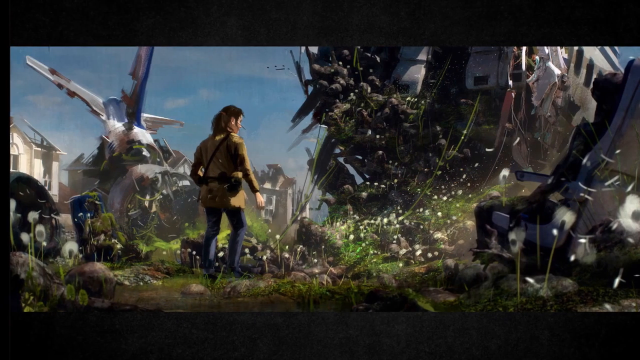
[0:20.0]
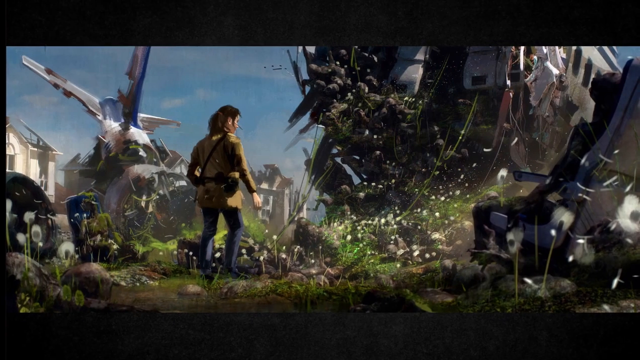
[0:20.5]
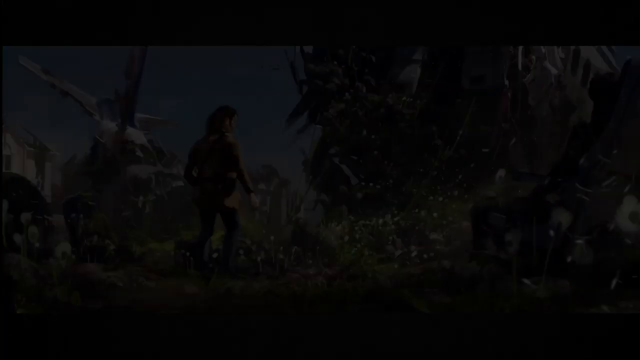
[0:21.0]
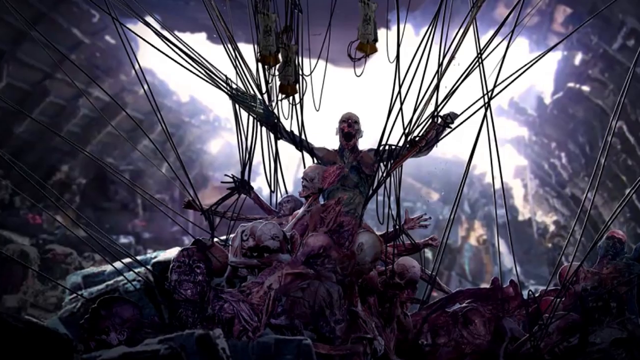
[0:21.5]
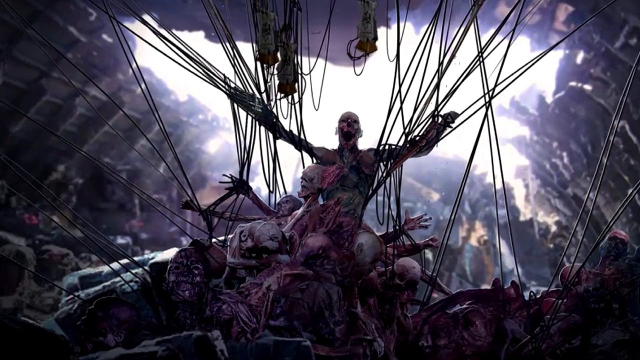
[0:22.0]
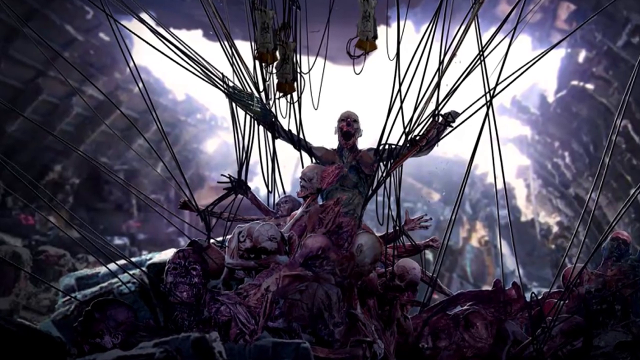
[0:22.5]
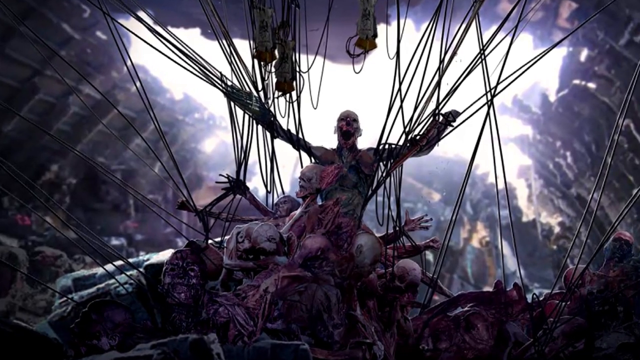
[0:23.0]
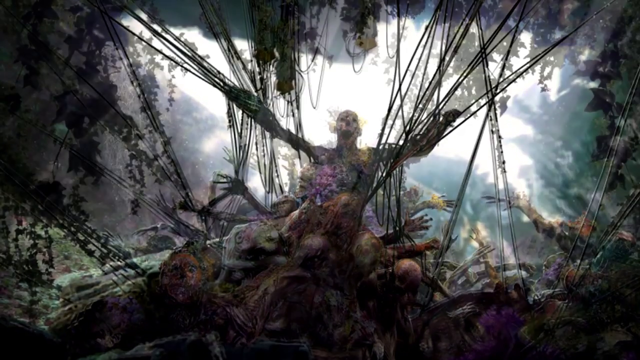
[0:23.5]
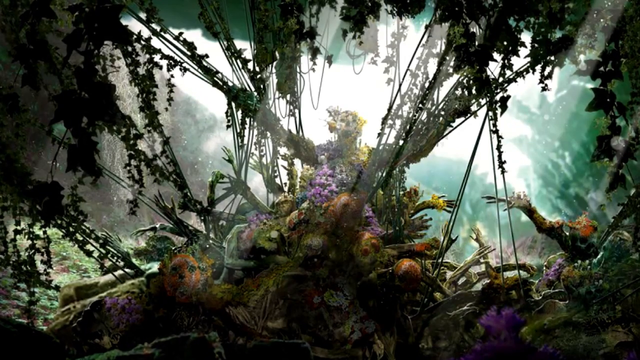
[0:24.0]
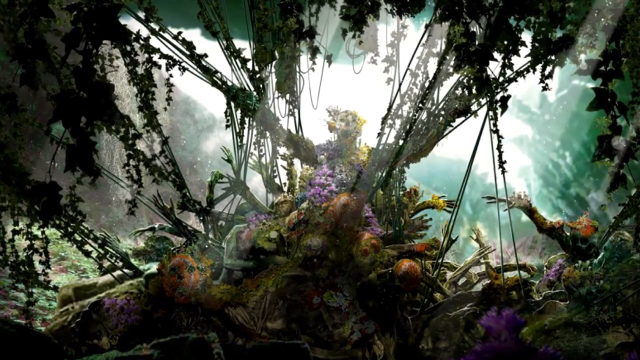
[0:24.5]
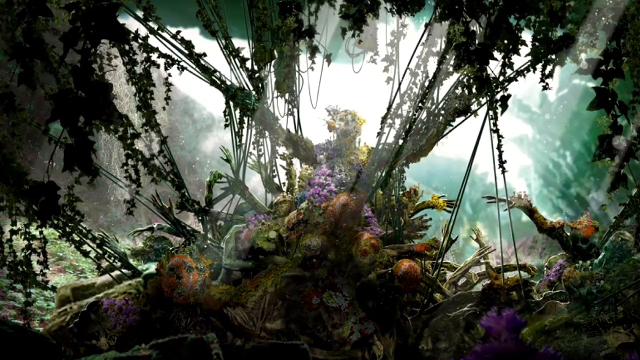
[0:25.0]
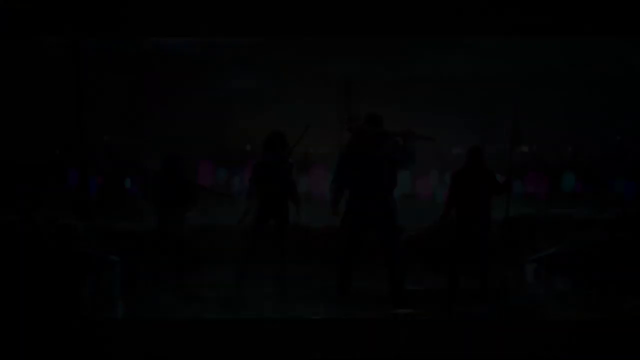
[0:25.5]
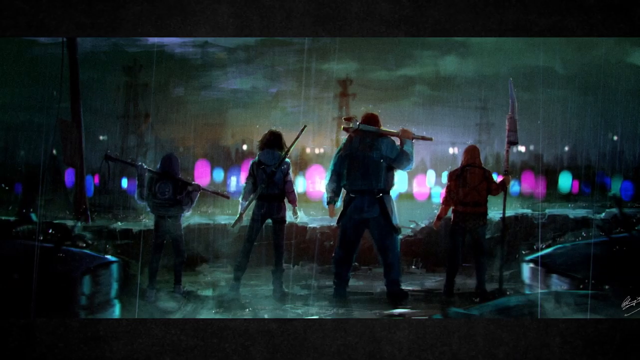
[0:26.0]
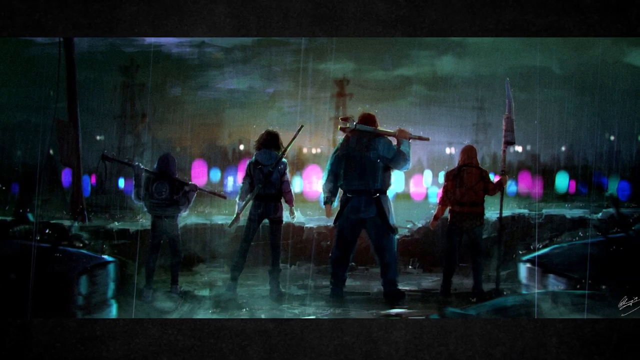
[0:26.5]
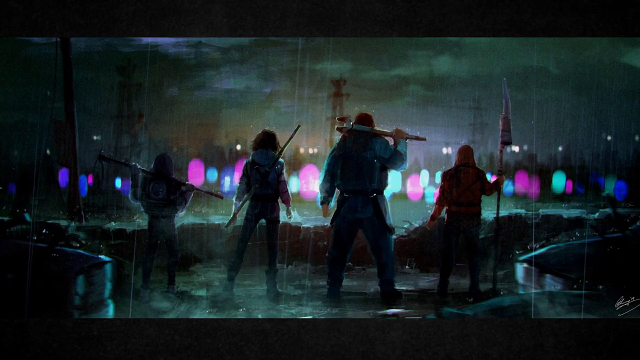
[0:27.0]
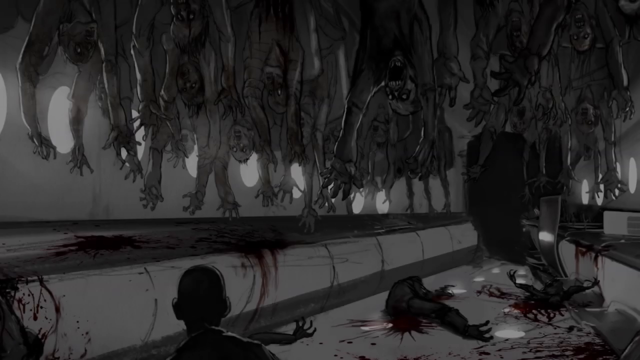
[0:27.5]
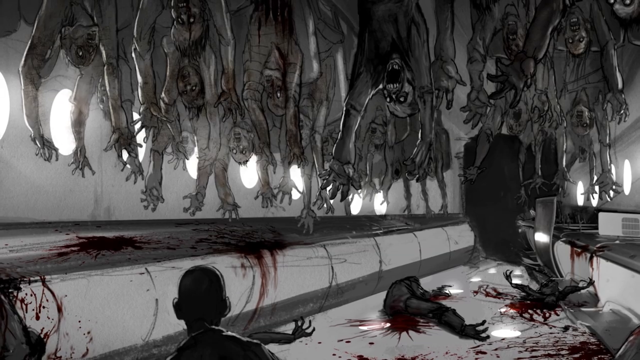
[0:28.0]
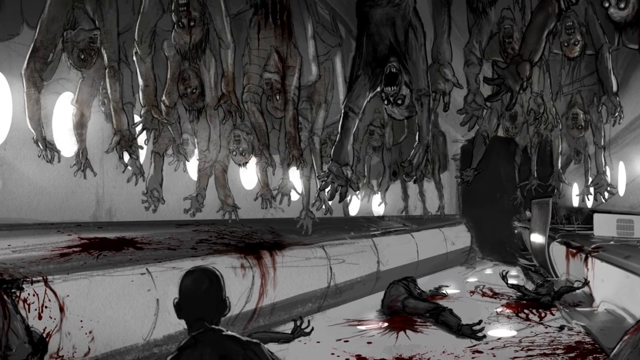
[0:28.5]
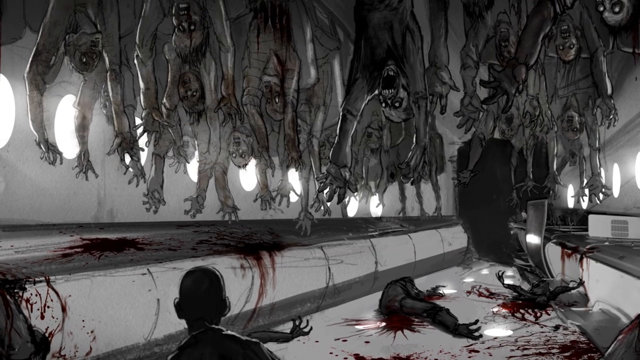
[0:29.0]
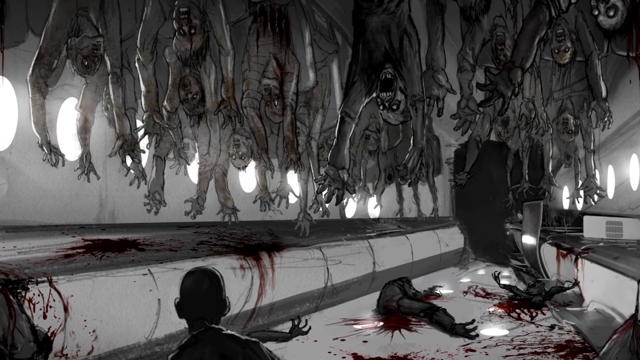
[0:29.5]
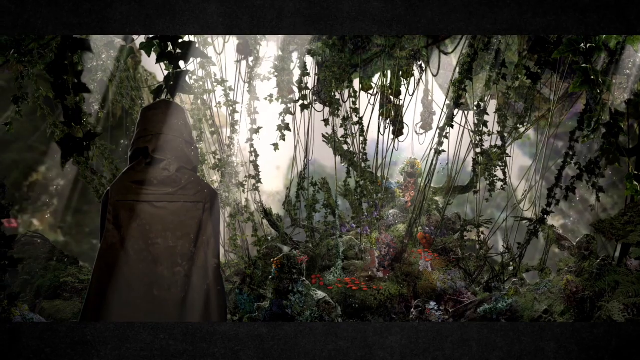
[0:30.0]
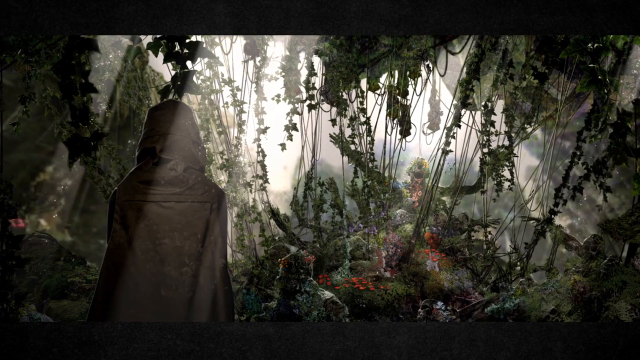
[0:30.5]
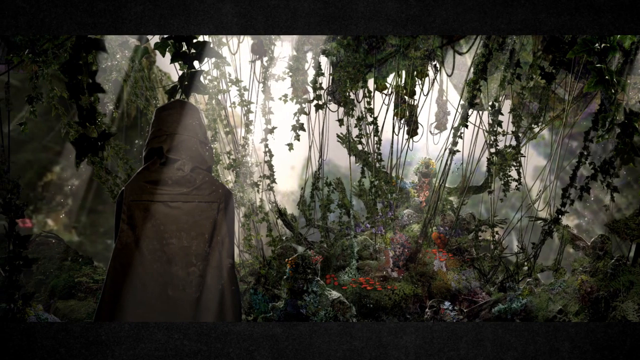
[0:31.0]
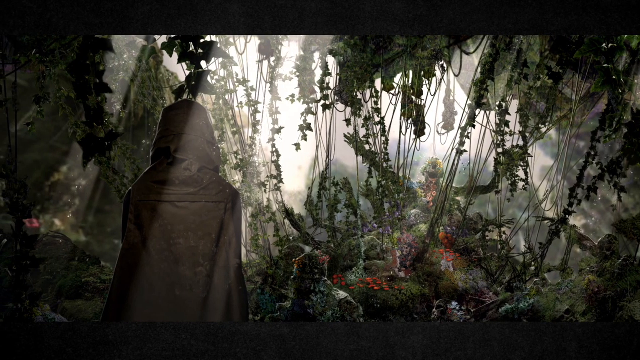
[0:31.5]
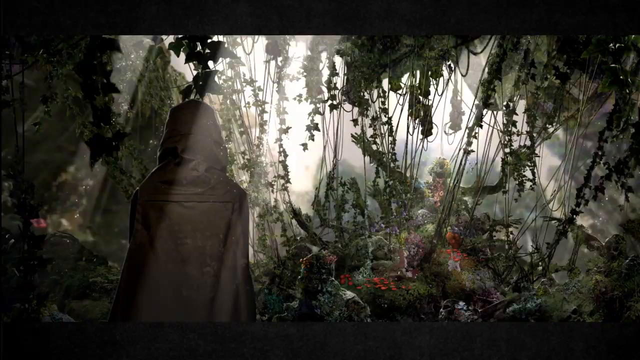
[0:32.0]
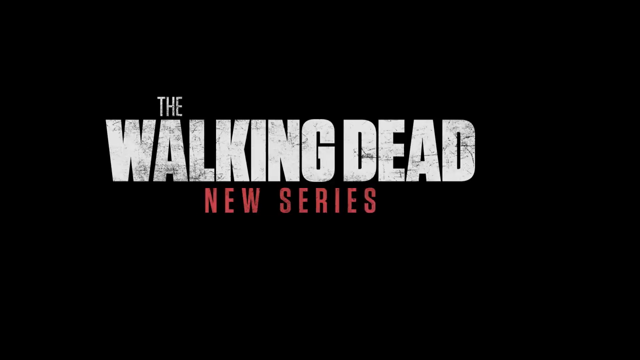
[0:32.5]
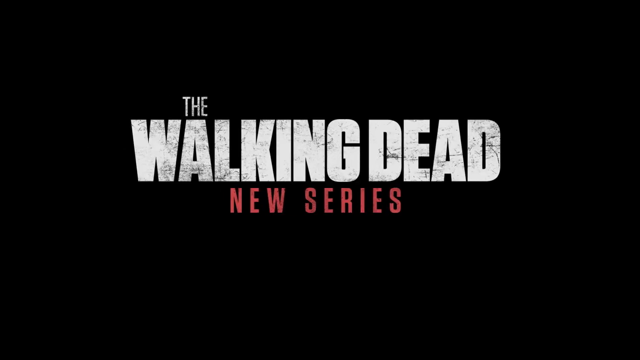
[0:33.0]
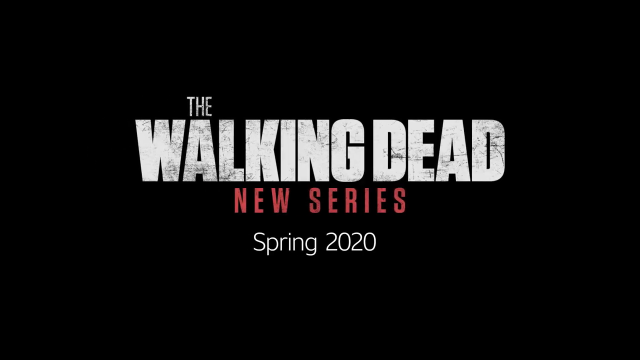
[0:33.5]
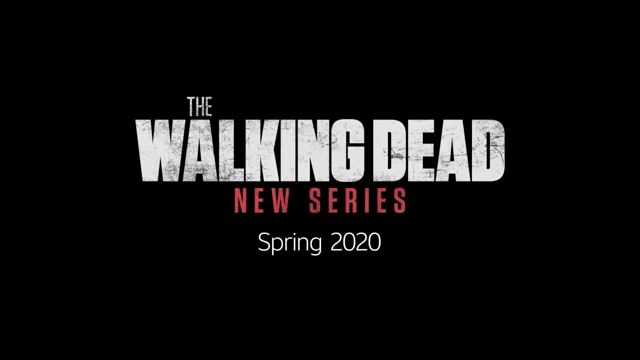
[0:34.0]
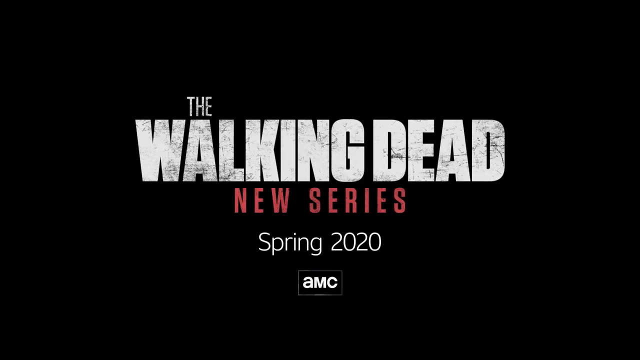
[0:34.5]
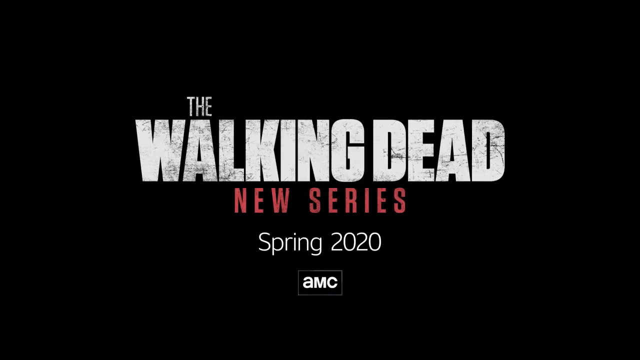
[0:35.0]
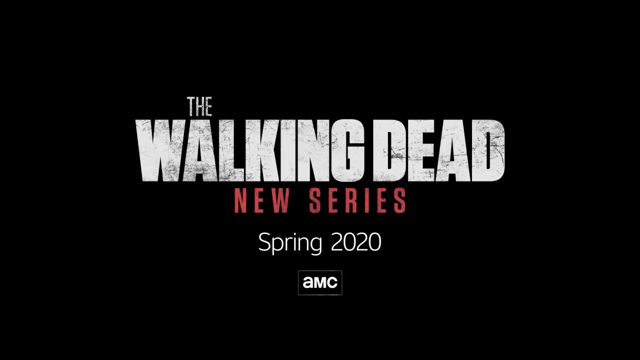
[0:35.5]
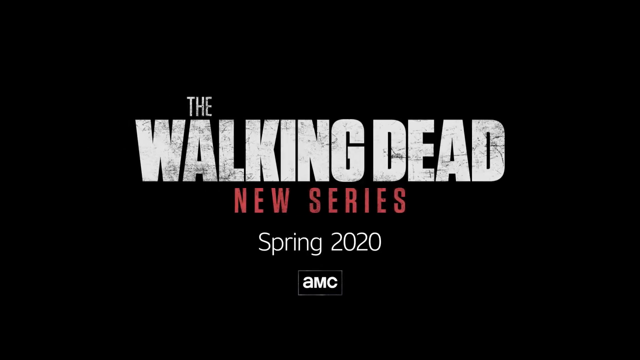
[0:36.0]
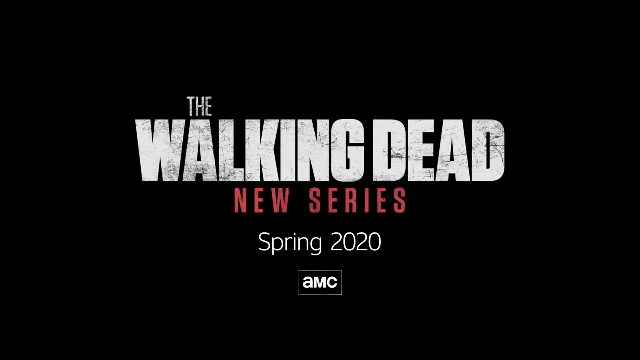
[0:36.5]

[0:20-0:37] Drawings of people appear, and when they stop on a picture of a person, that person appears in real form and says something. The first is a young lady, the second another young lady, the third a young male and the fourth a young female. A drawing of two aircraft appears on the screen, and then another lady appears and says something. A very chaotic scene follows, with what seem like zombies and fire everywhere. Next, a scene shows a lady and what seems like a very large aircraft in pieces. A very scary scene then shows a couple of zombies, after which the zombies appear in colour and there are more of them. About four human beings are seen, followed by zombies hanging upside down, with blood everywhere. A forest appears with more zombies who have turned into flowers, and another zombie is standing. The title is shown: "The Walking Dead, new series, spring 2020".